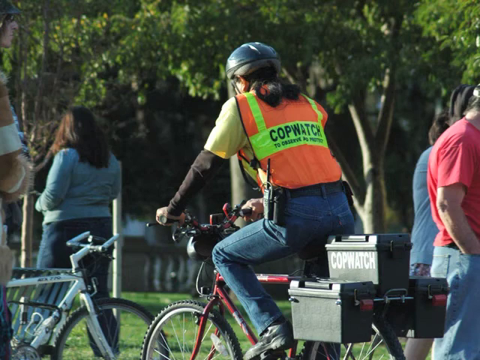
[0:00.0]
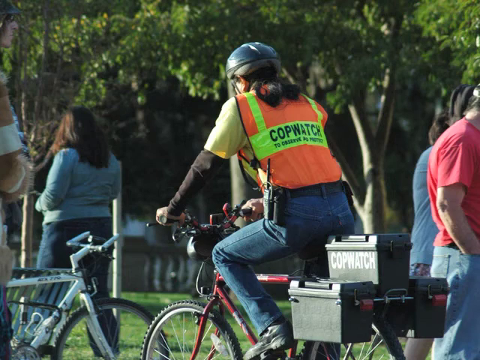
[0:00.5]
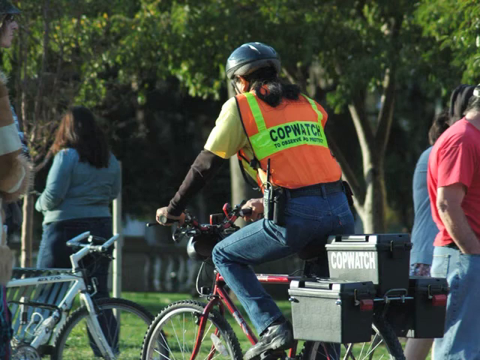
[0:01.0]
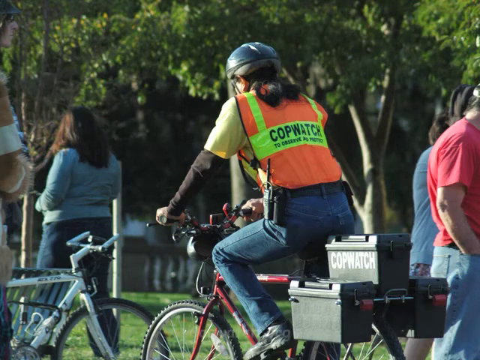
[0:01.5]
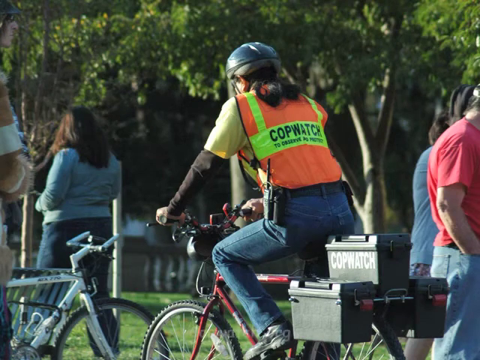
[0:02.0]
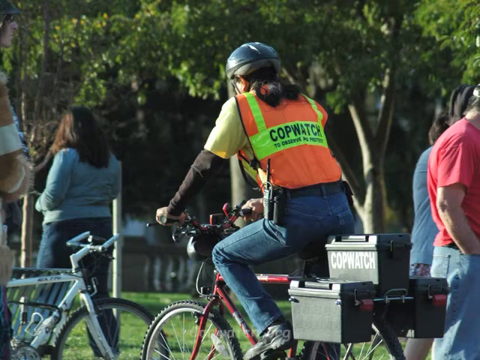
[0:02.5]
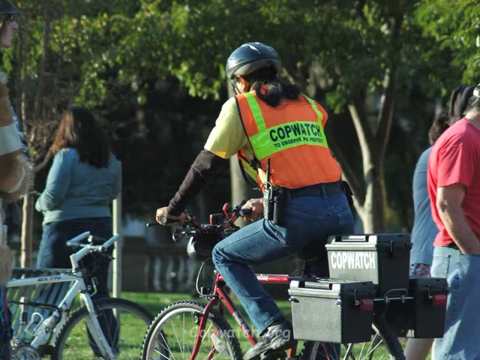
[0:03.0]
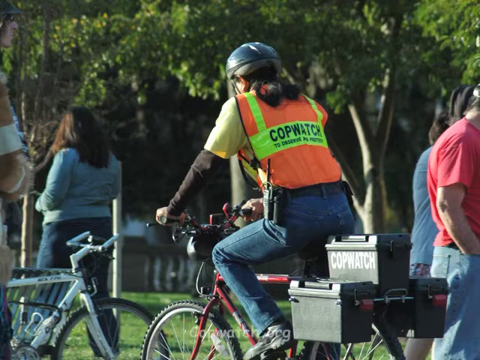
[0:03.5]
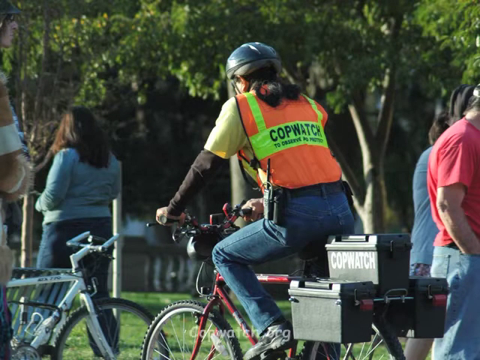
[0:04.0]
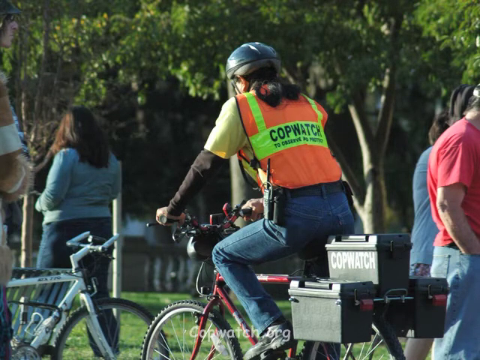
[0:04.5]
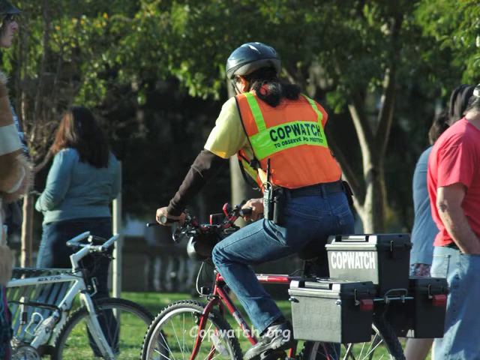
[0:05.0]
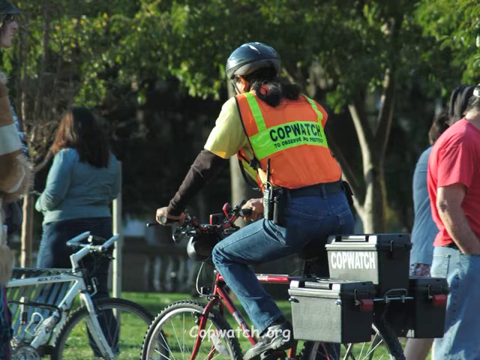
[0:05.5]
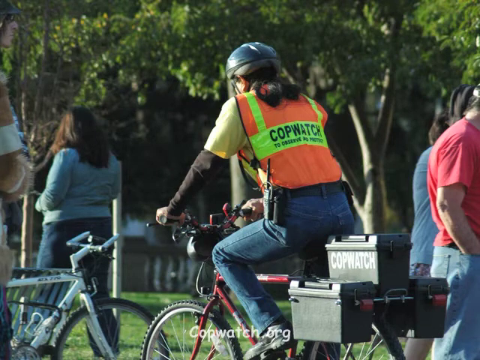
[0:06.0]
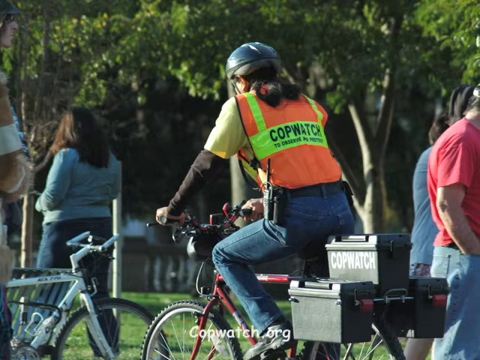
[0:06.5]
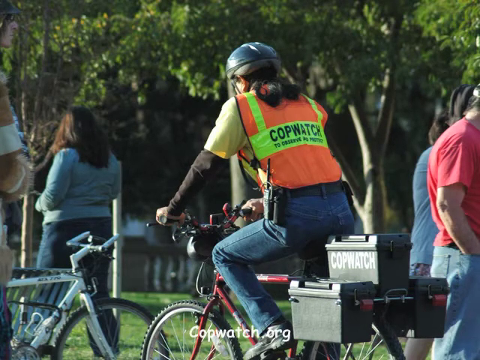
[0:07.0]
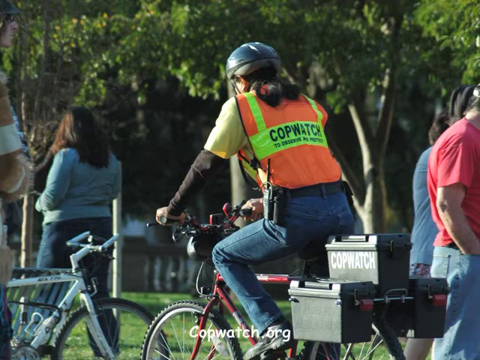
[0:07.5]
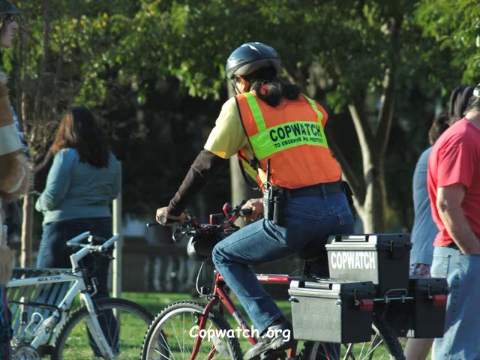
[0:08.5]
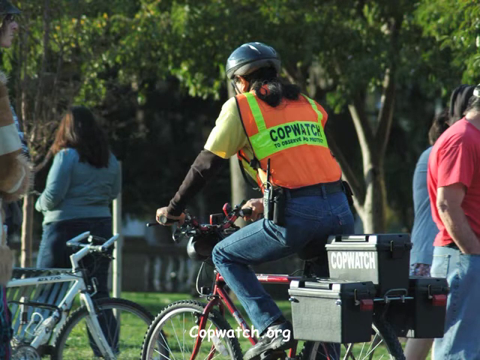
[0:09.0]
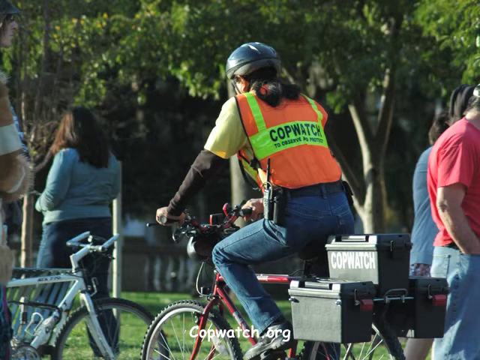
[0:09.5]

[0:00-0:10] The video shows a still picture of what appears to be a man on a bicycle. He wears an orange vest, similar to those worn by construction workers to draw attention to the wearer. Along the fluorescent stripe on the back of the vest is the word "COPWATCH" in black capital letters. Beneath it is small lettering of what appears to be four words; the first two read "TO OBSERVE" and the other two cannot be made out from this angle. He wears a bicycle helmet, and there are three compartments on the back of the bicycle, one of which is a black container with "COPWATCH" displayed prominently in white letters.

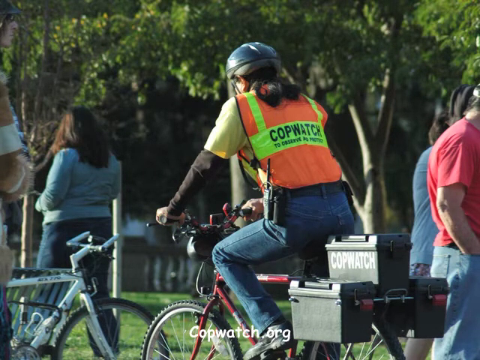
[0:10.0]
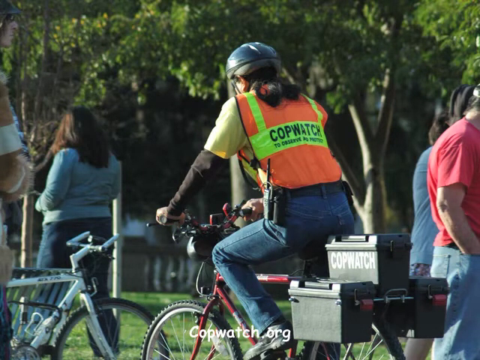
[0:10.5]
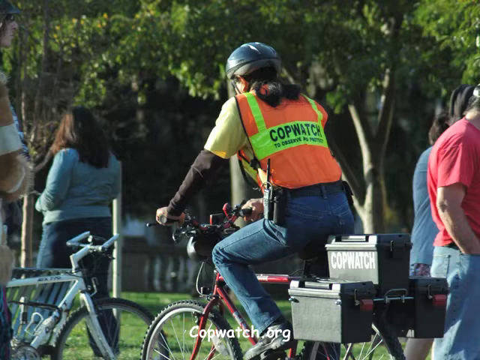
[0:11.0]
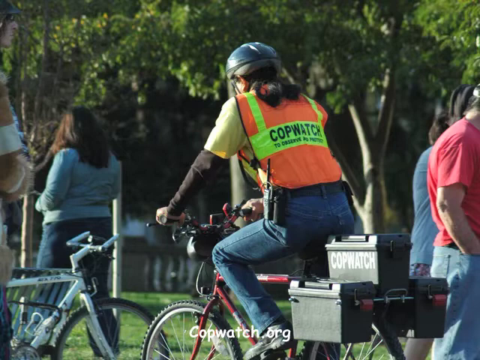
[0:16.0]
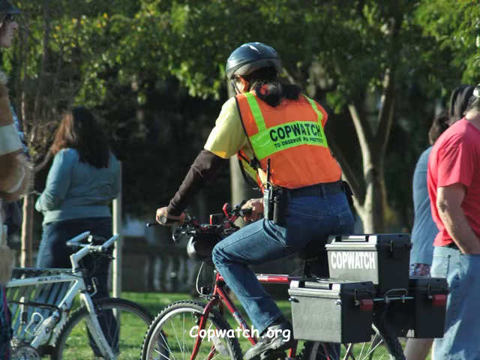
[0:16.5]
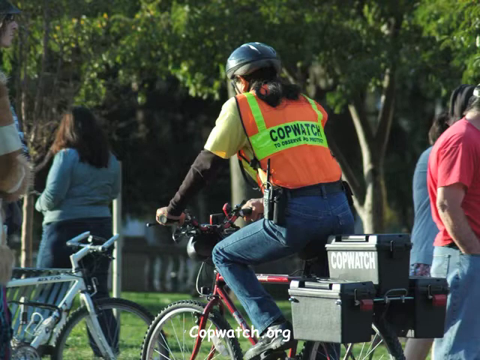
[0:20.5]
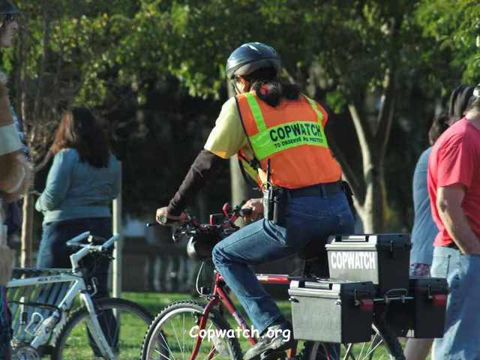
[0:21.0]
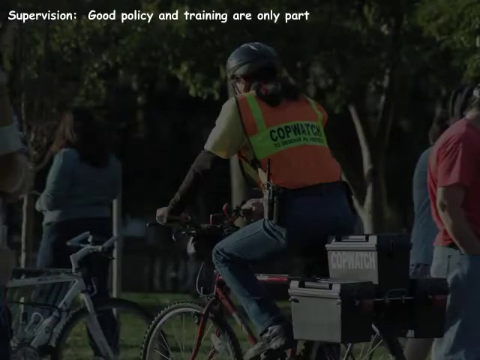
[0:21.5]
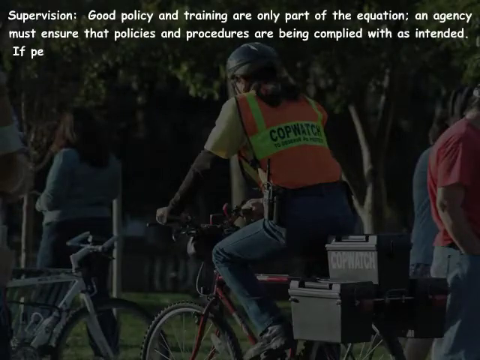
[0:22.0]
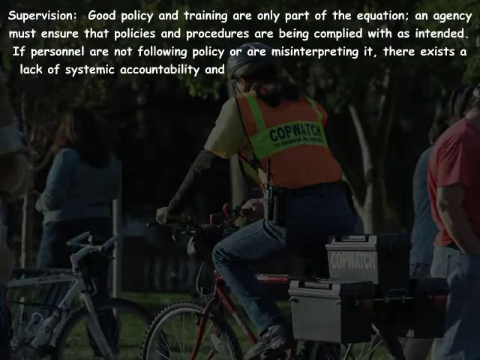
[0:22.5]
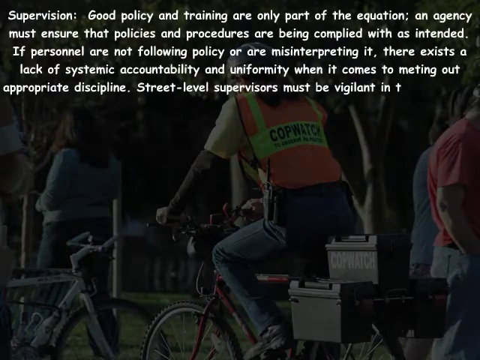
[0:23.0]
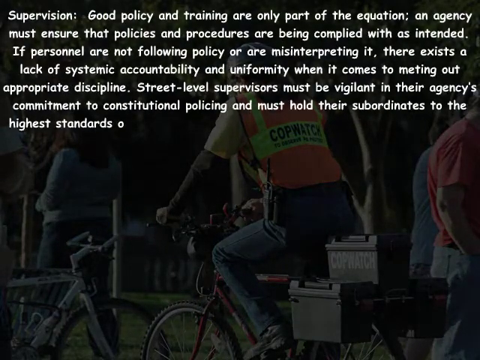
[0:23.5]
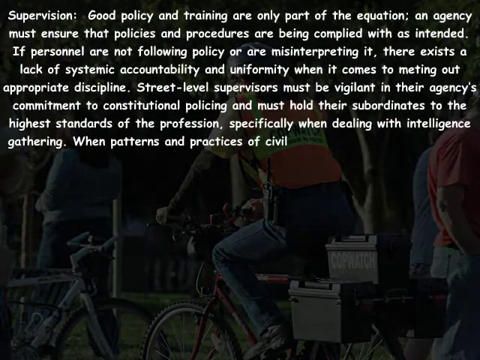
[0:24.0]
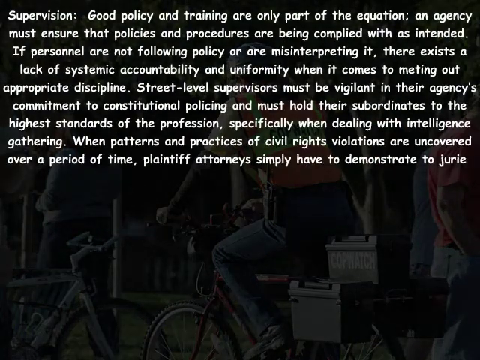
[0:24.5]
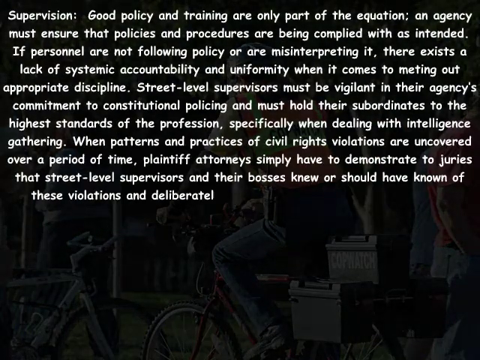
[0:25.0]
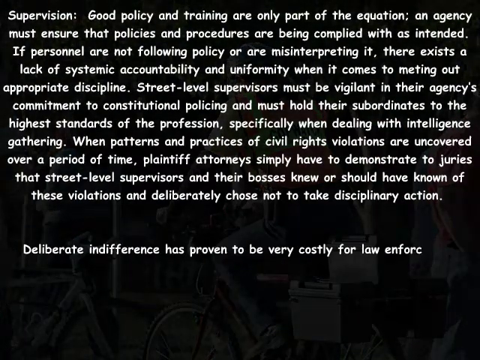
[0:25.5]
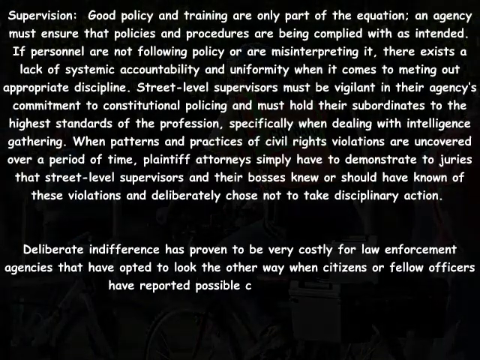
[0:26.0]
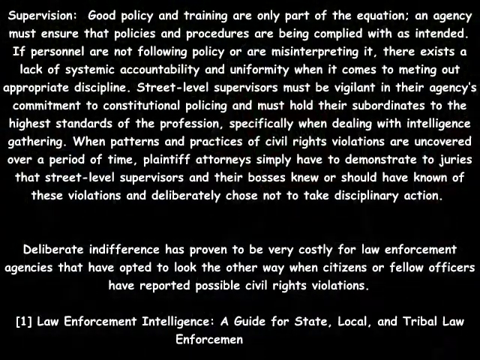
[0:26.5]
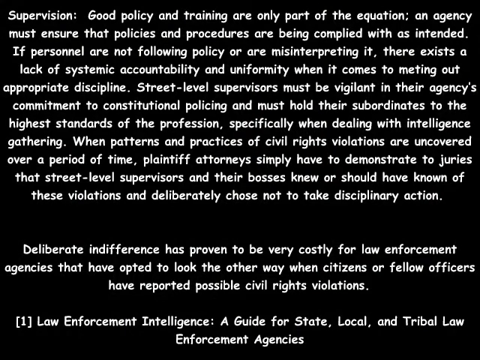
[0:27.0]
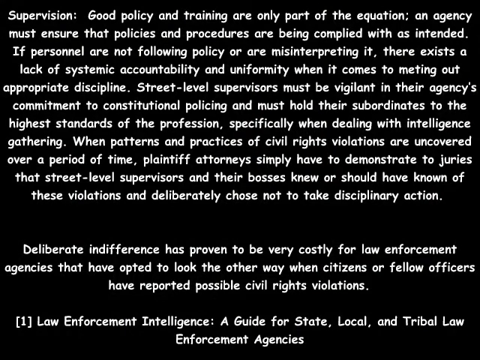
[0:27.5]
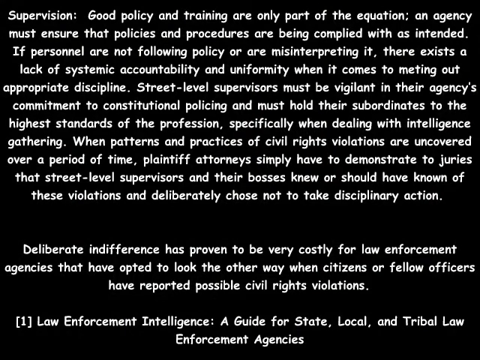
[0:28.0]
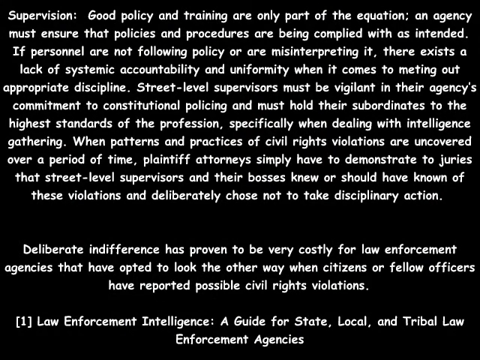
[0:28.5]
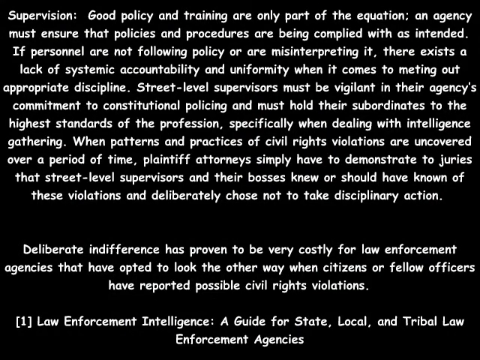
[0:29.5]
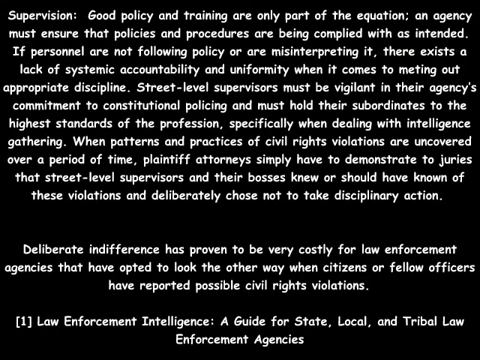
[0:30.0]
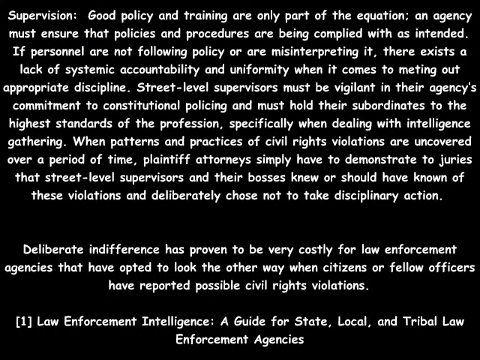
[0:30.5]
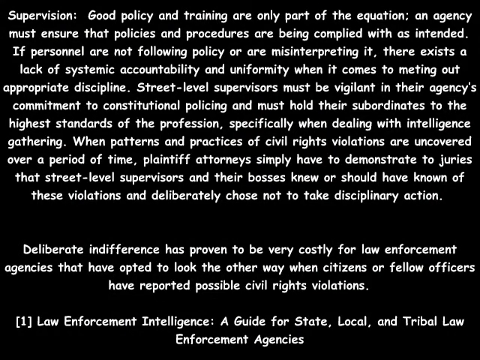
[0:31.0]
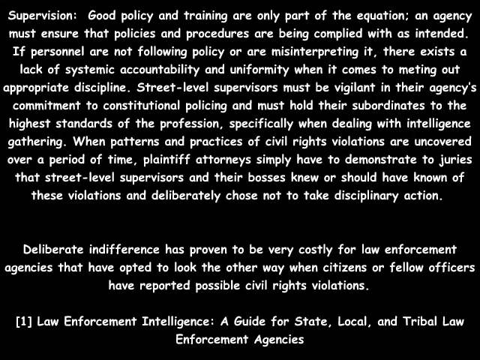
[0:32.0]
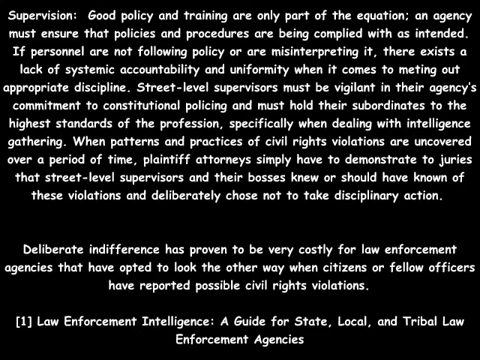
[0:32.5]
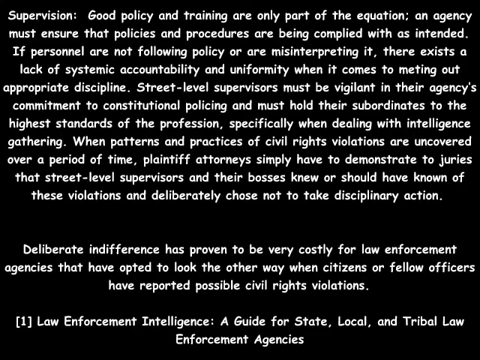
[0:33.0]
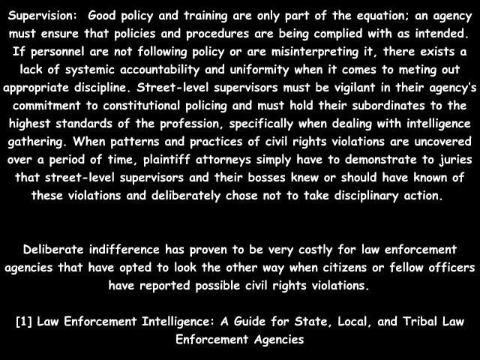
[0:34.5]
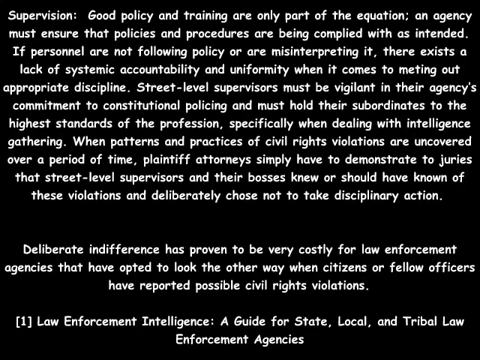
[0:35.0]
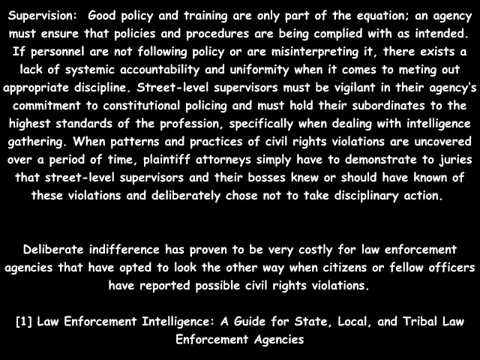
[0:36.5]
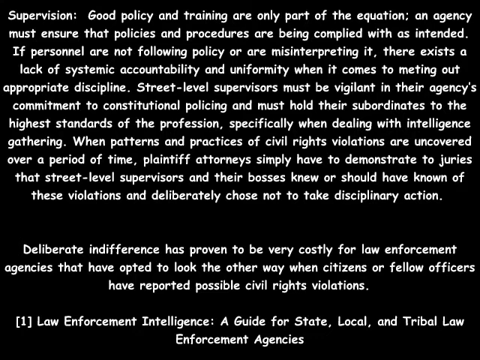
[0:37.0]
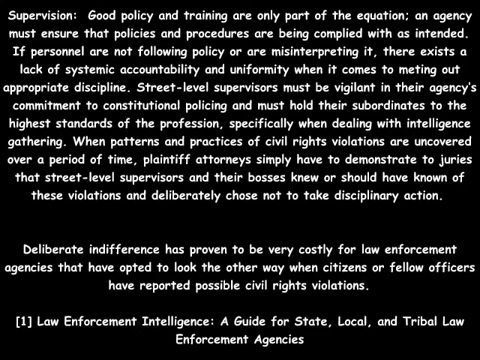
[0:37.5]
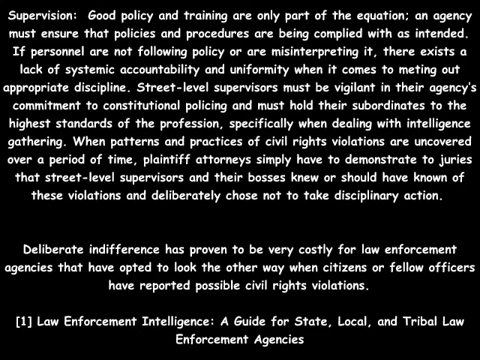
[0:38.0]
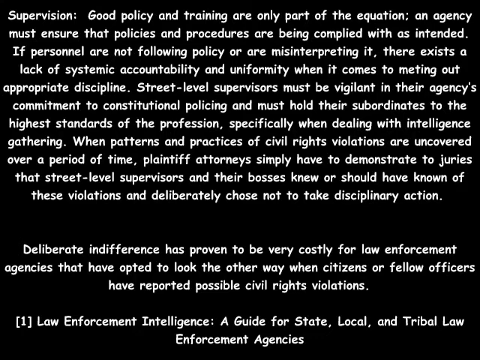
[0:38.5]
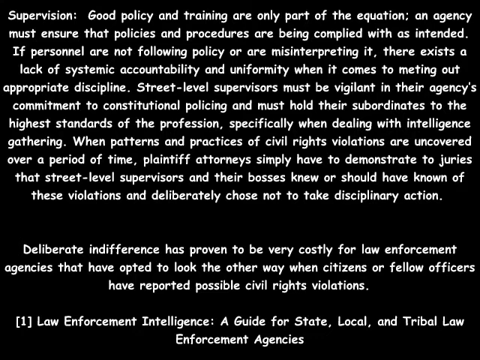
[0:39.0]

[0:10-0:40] A still photo shows a man on a bicycle wearing an orange work vest with "COP WATCH" in capital letters on the back. He wears blue jeans and a yellow short-sleeved shirt with a black t-shirt underneath. He rides a red bicycle with three components on the back, one of which is a black box with "COP WATCH" in capital letters. He appears to be riding through a park or other public area, with at least three noticeable pedestrians around him. The video continues with a couple of paragraphs of captions: one describes the policy regarding street-level supervisors under the heading of supervision, another describes the cost of deliberate indifference and how it is costly to law enforcement agencies, and another begins to describe law enforcement intelligence.